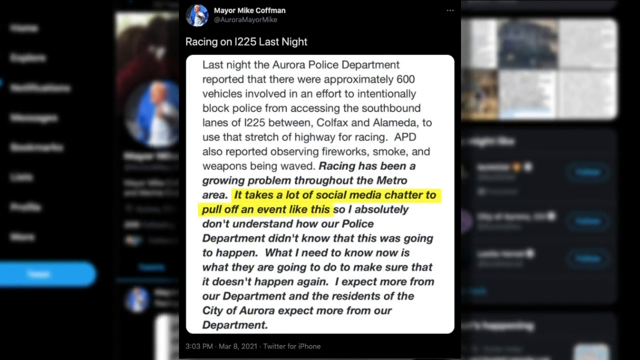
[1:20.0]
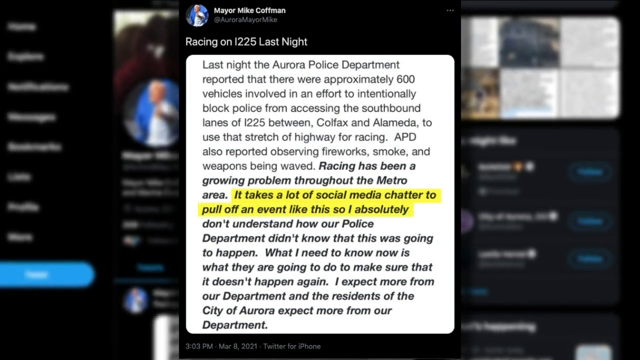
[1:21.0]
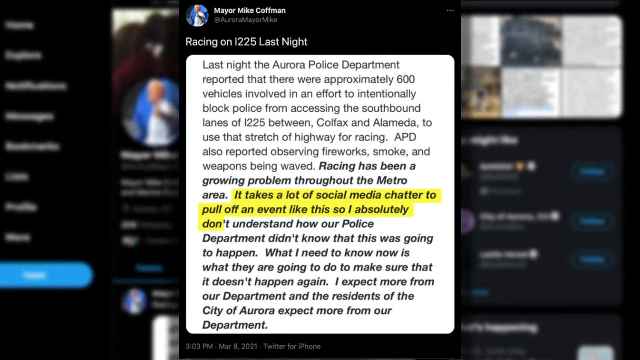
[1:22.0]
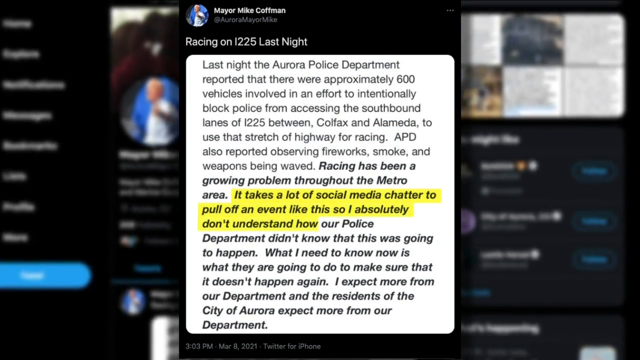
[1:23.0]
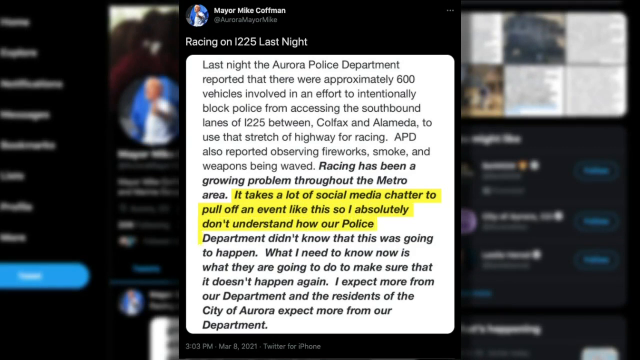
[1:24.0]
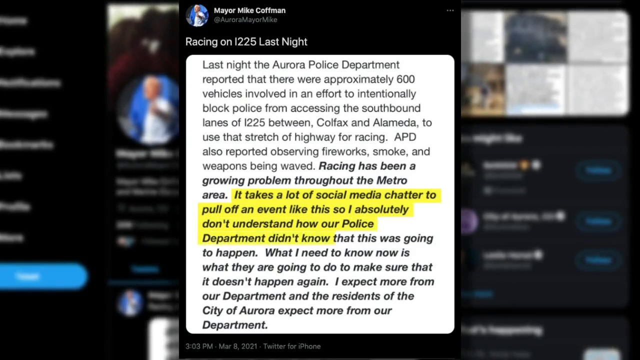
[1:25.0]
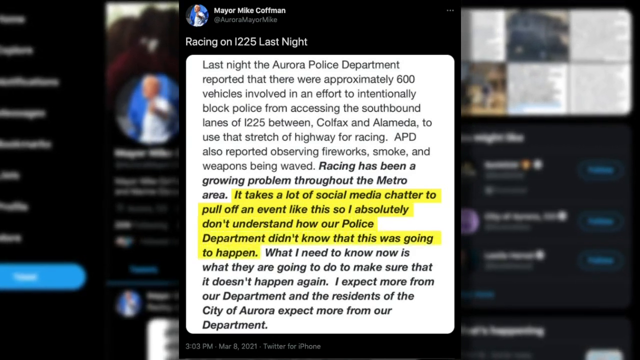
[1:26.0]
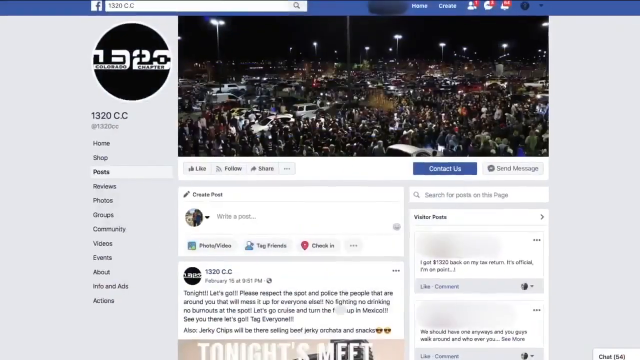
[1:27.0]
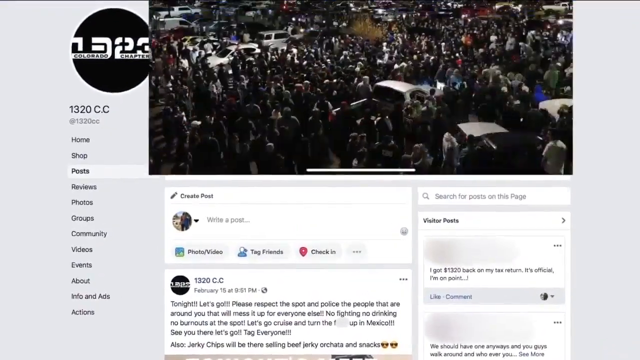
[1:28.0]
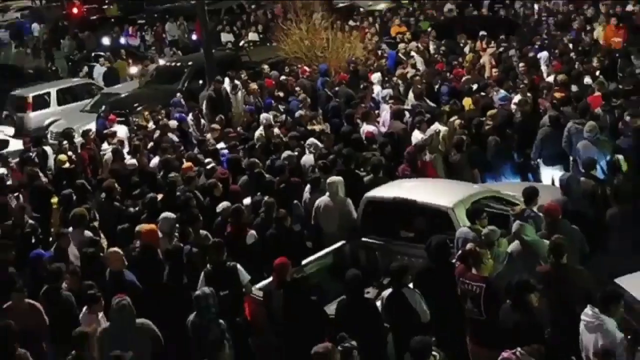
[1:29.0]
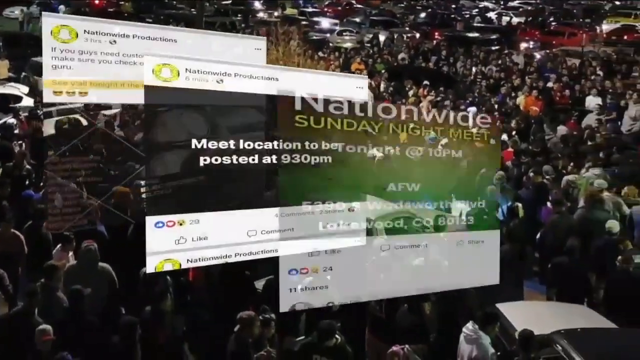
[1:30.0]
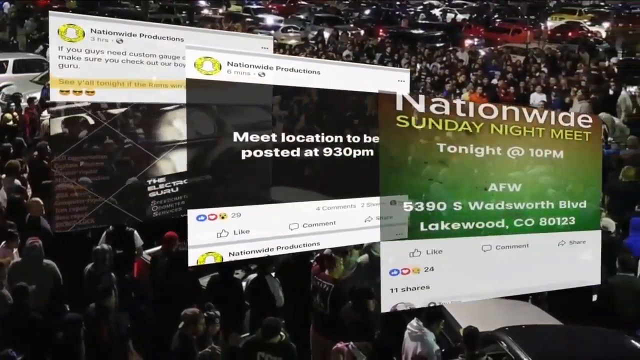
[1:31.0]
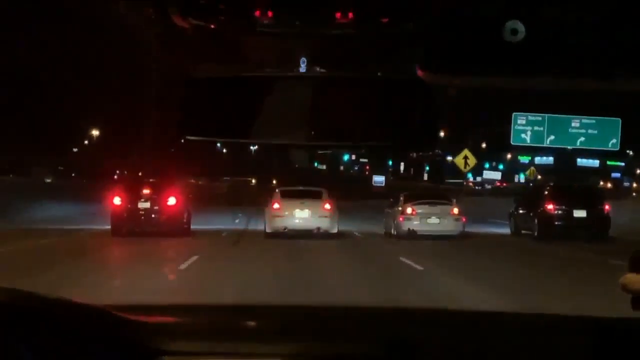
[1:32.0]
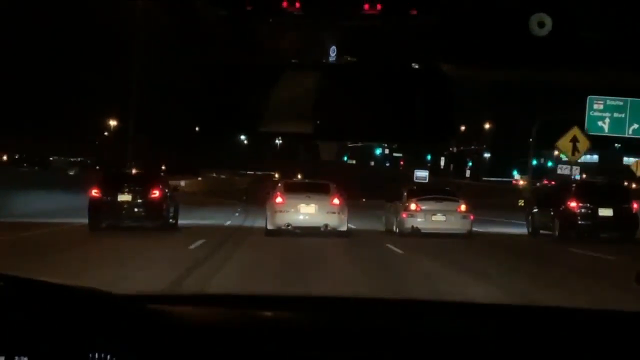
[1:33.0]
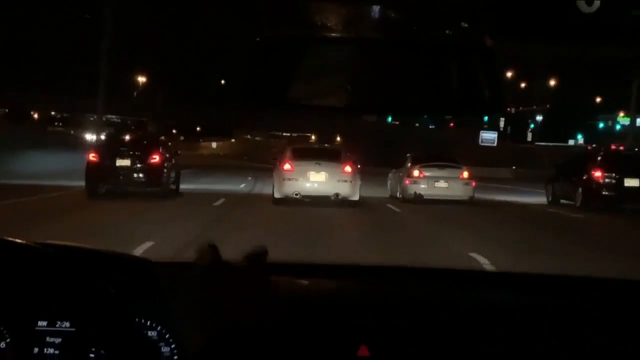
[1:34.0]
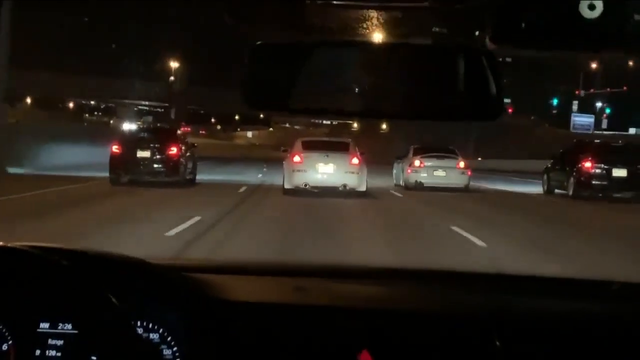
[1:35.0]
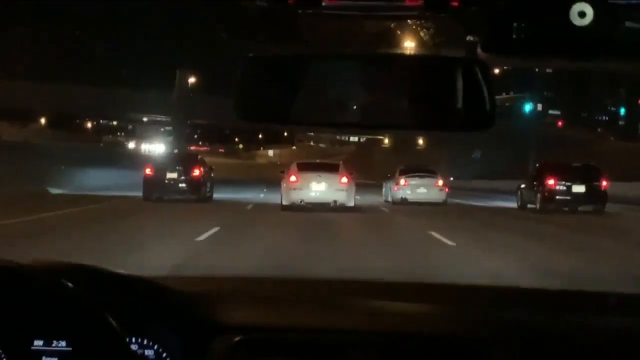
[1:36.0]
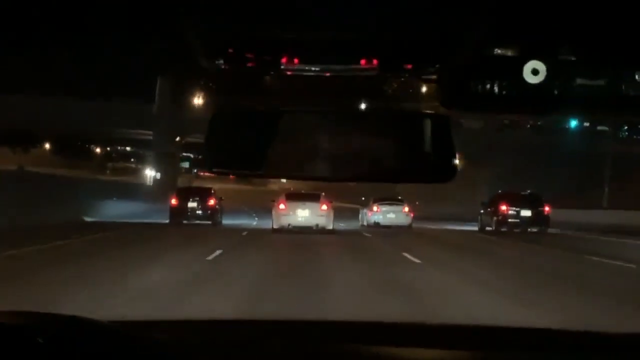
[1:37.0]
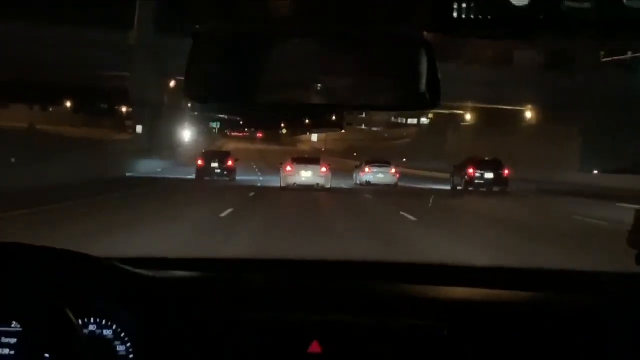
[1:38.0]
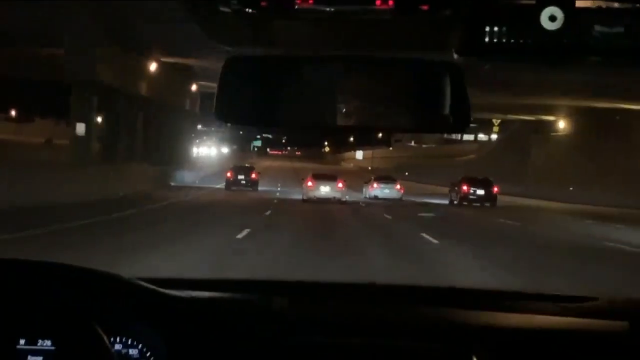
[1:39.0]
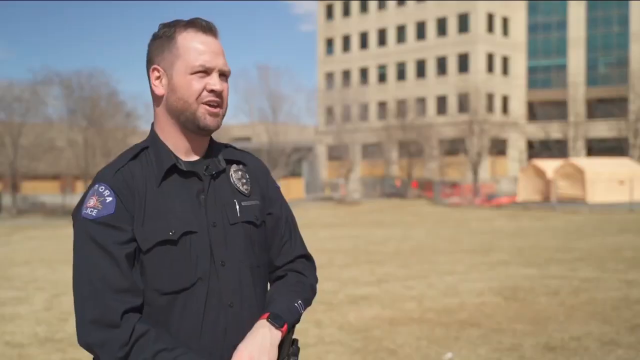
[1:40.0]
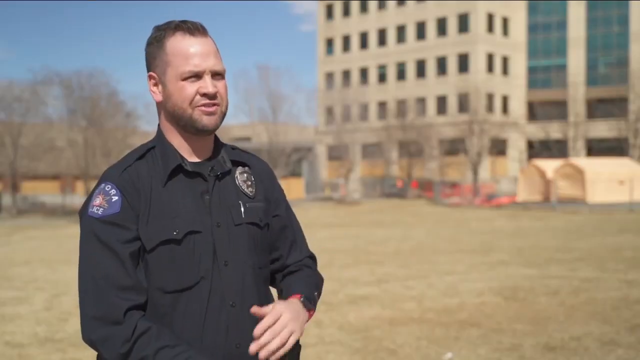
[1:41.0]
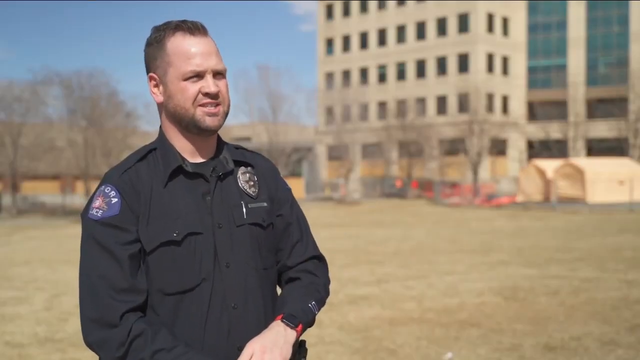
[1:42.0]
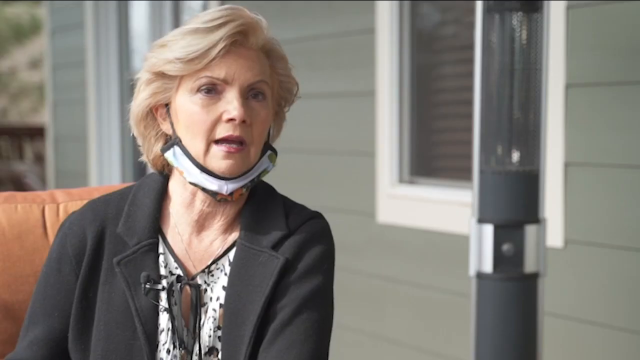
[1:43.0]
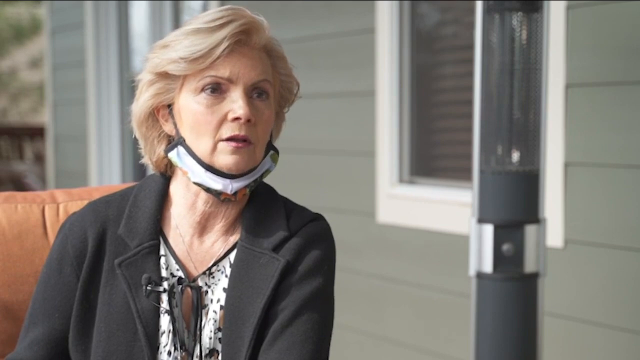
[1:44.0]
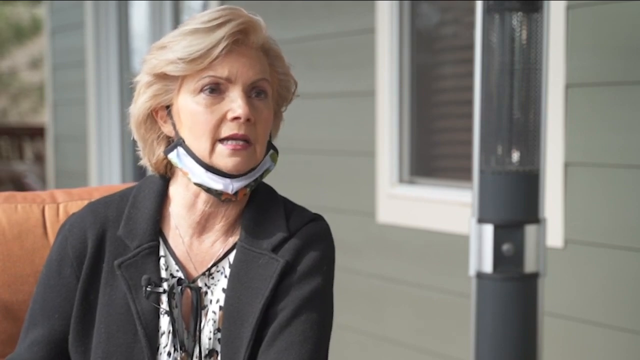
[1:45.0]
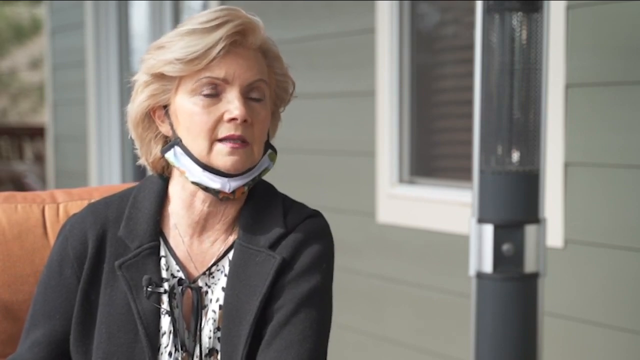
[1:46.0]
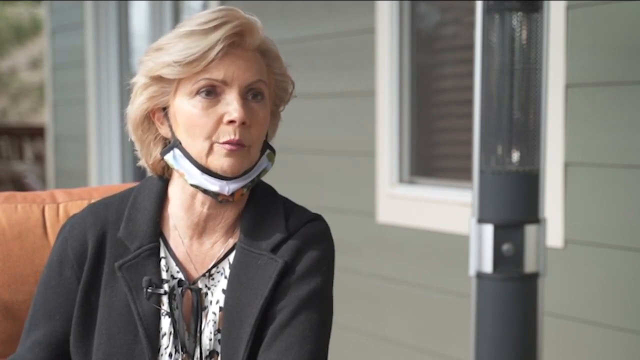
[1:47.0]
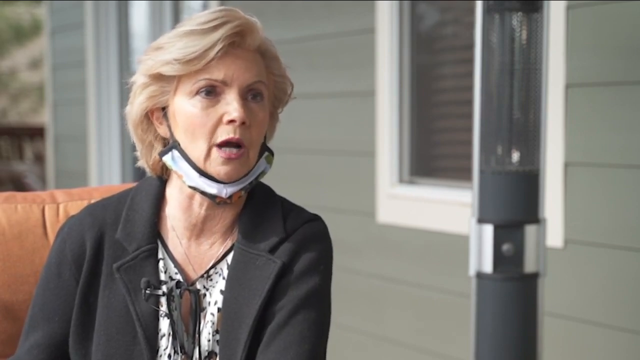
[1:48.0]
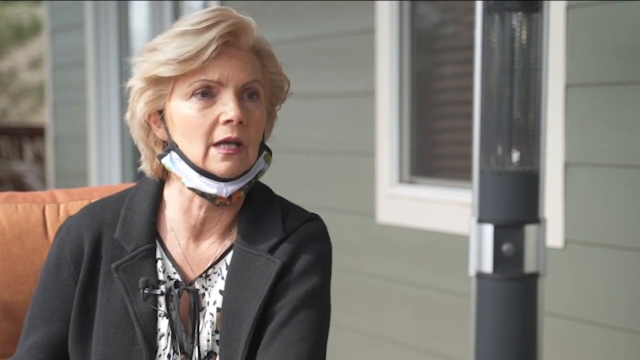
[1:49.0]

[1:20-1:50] More words of the tweet are highlighted in yellow, including "so I absolutely don't understand how our police department didn't know that this was going to happen". A transition screen has something move from the top right to the bottom left before a Facebook page for 1320 C.C. is shown. The camera zooms in, and the banner image is clicked and opens up larger. A quick close-up shows someone shifting gears. The scene transitions to thousands of people standing outside beside vehicles as the camera tilts and pans to the right. Three Facebook posts appear center screen, diagonally oriented and overlapping. Next comes a first-person view of driving a car behind four other cars; the driver raises his hand in a gun gesture, drops it, and continues to drive. The scene transitions to the cop standing outside the building once more, continuing to talk. Then an elderly white woman with blonde hair and a mask on her chin is shown on the left, sitting on a porch. She begins to talk as the wind blows her hair.